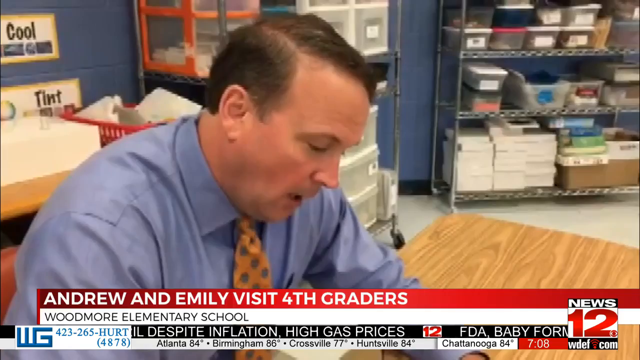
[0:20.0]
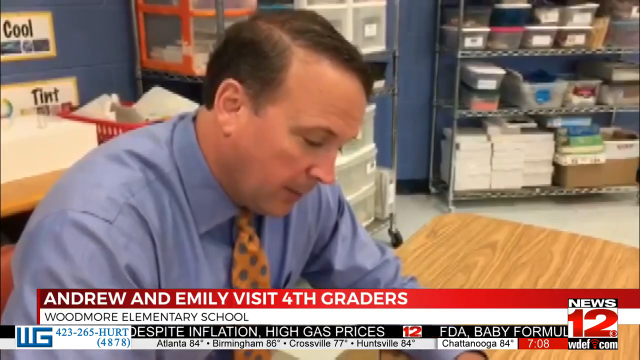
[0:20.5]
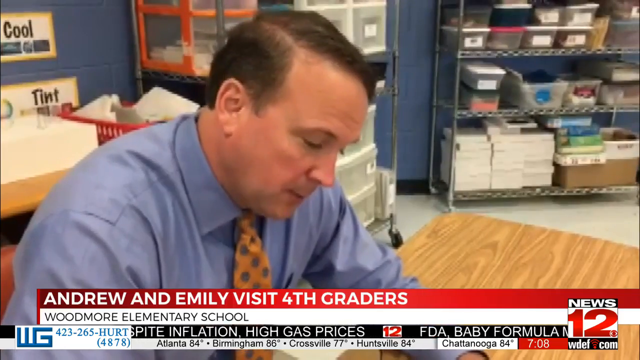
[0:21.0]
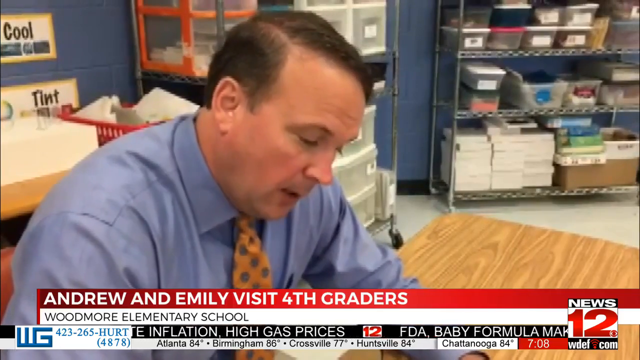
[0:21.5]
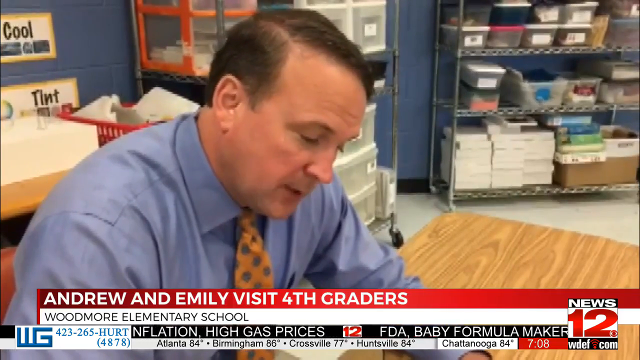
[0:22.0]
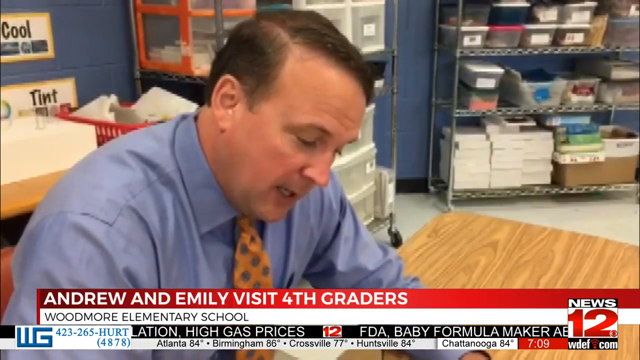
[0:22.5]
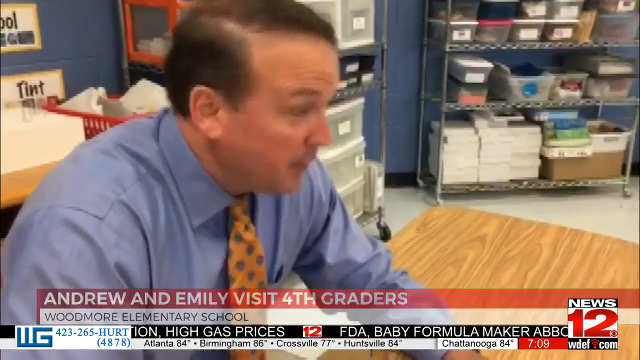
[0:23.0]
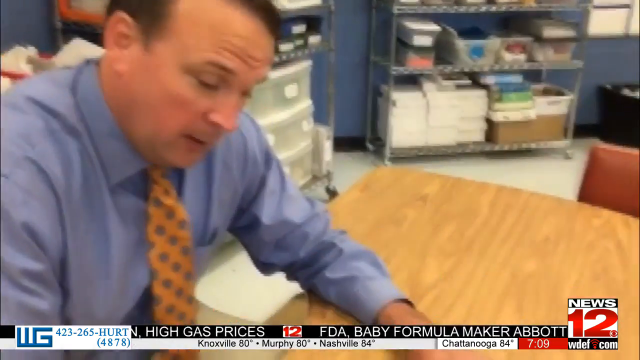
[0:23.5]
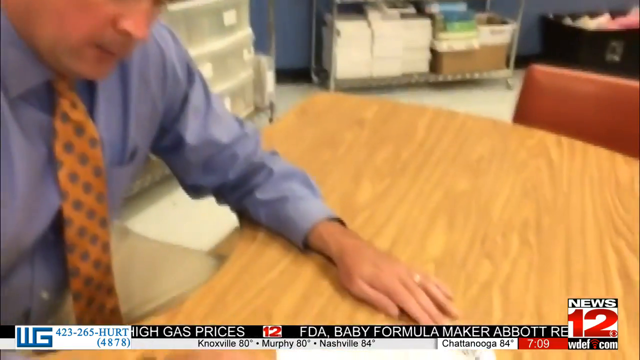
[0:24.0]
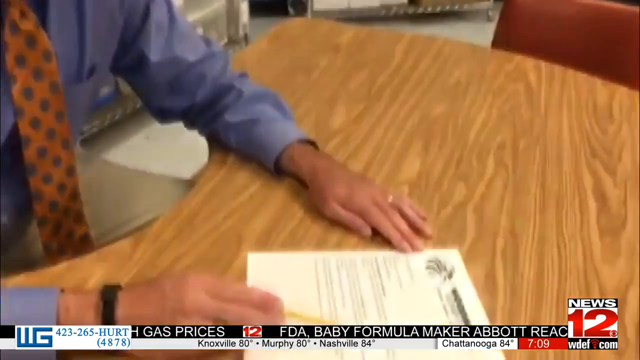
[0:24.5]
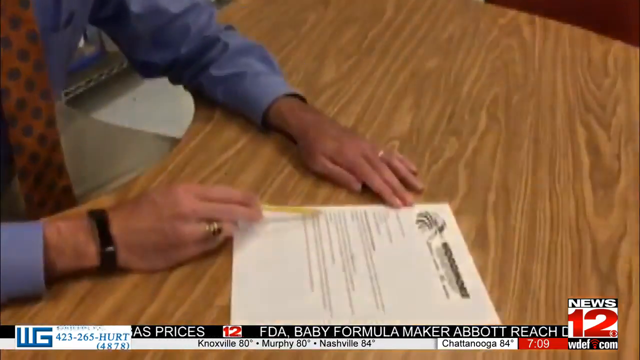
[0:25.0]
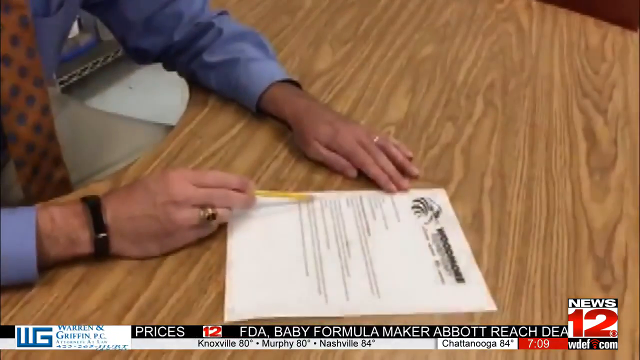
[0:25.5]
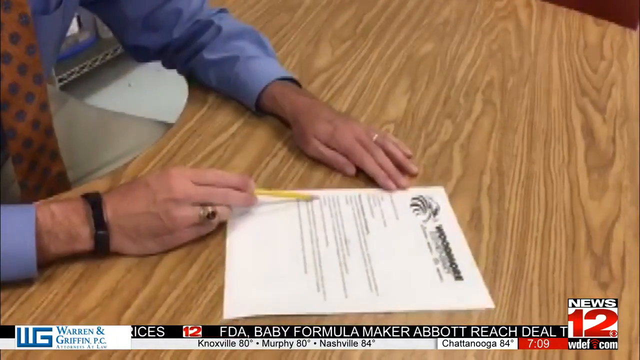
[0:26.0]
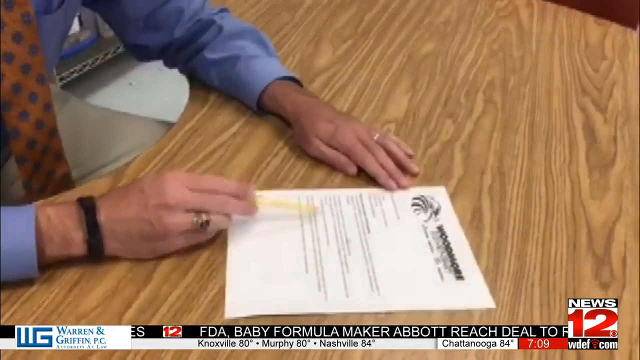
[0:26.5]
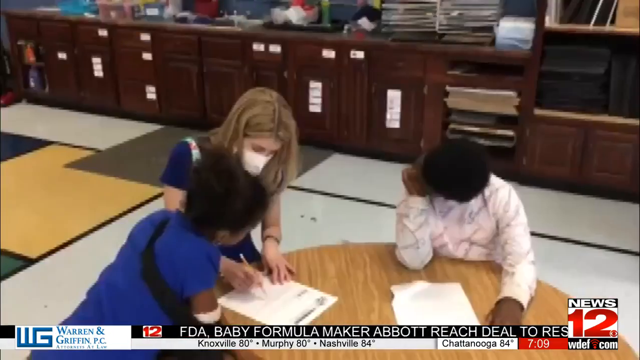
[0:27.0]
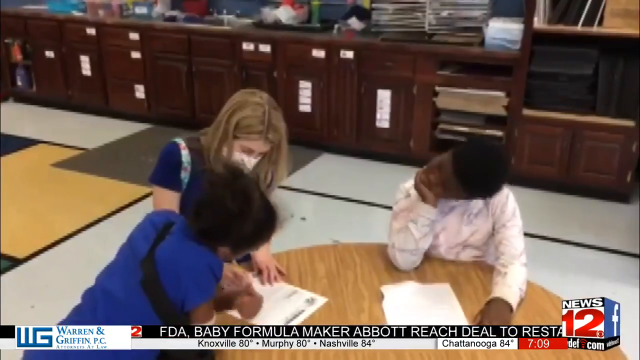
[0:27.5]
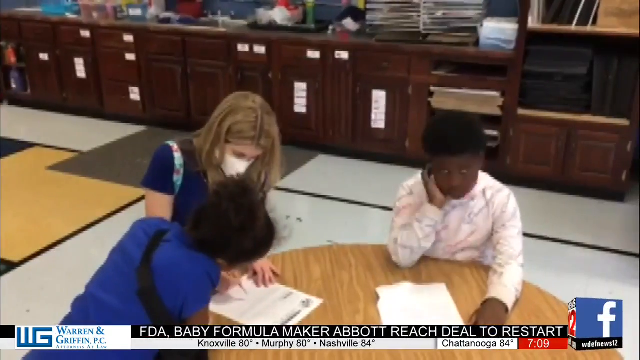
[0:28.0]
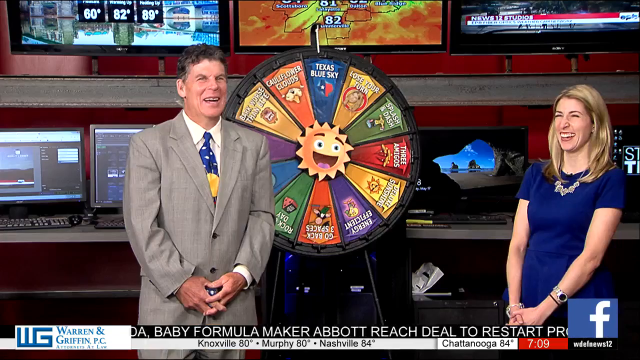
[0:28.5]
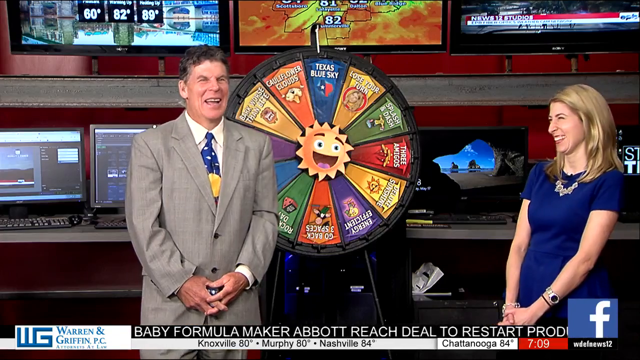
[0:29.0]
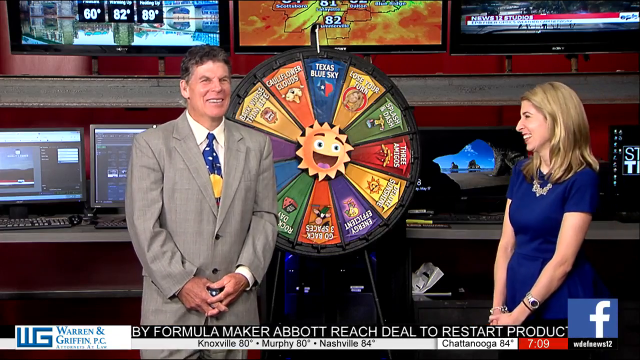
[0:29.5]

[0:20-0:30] The same gentleman looks down at the piece of paper, reading its contents out loud, in what appears to be a classroom setting. He briefly looks back up at the child, then looks down again and uses the pencil to indicate a particular area on the paper, highlighting specific areas. A transition shows the woman with a medical mask on at a different table, speaking to two different children. Another transition then shows the same woman on the right and a gentleman on the left wearing a suit and tie; this time the woman is not wearing a medical mask. Behind them is a weather station type of setting with a rotating, game show style wheel.